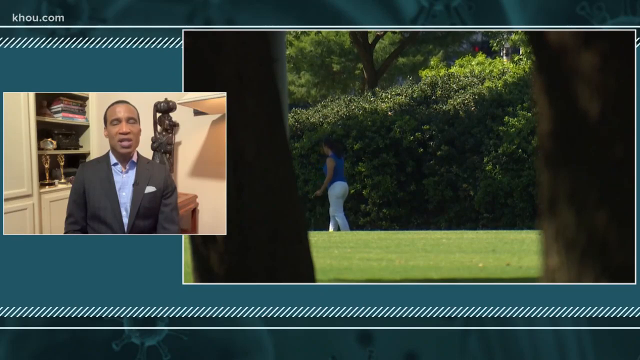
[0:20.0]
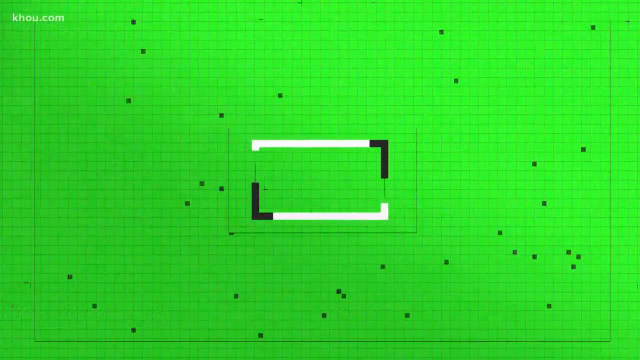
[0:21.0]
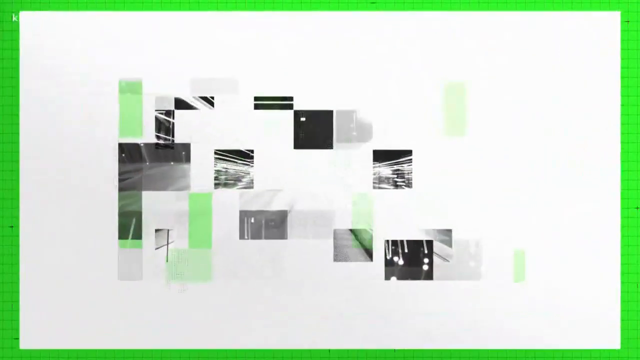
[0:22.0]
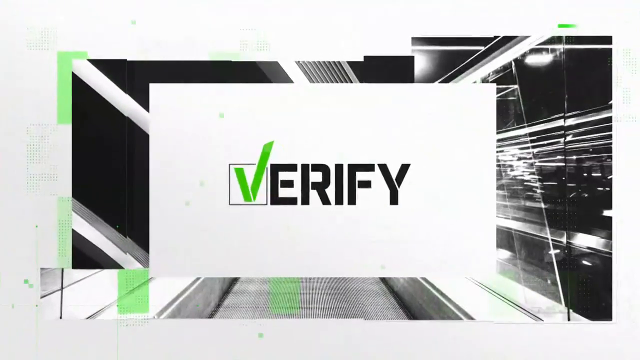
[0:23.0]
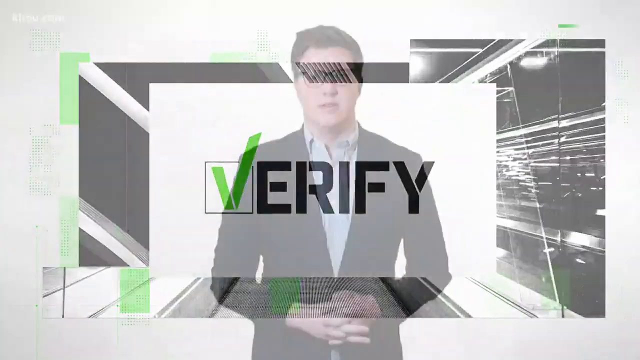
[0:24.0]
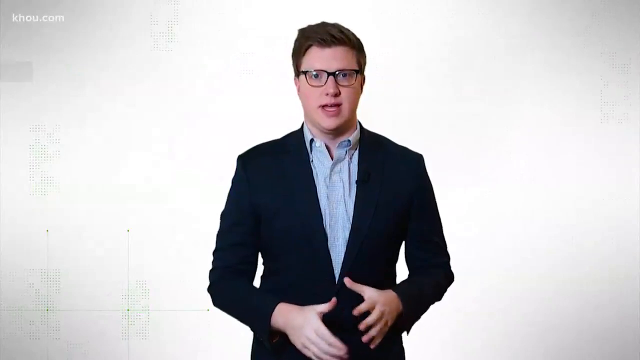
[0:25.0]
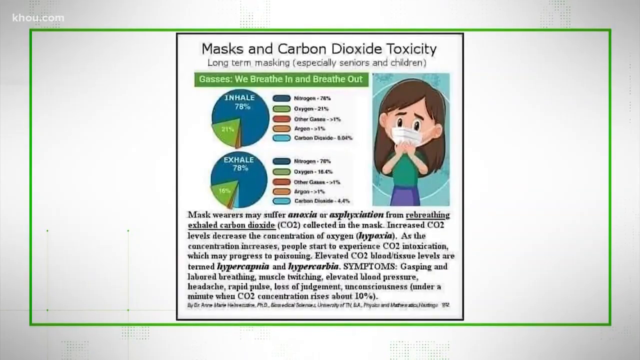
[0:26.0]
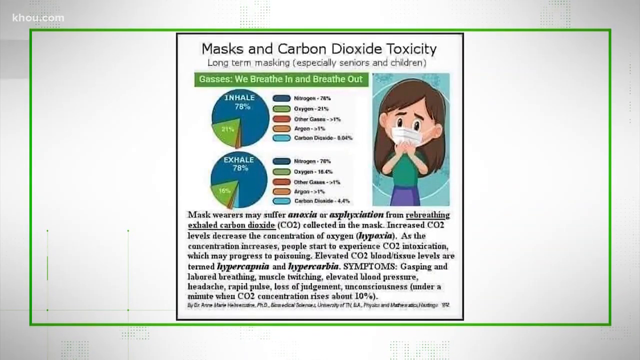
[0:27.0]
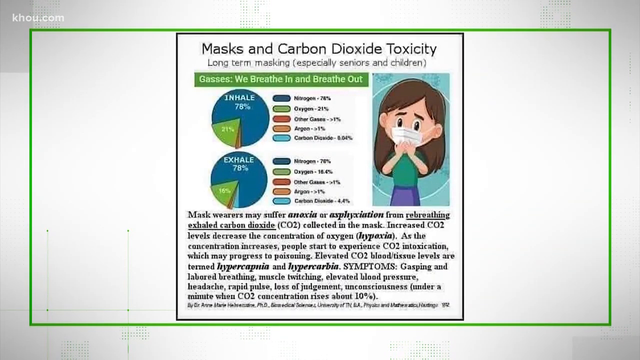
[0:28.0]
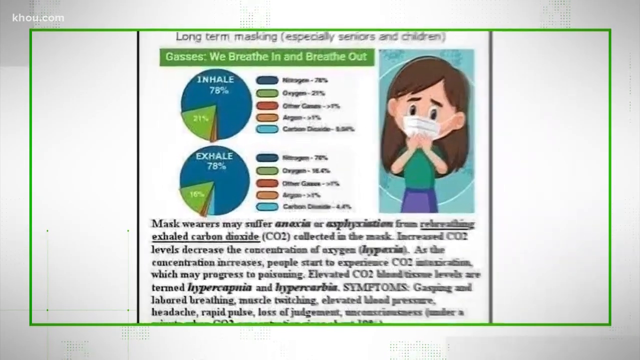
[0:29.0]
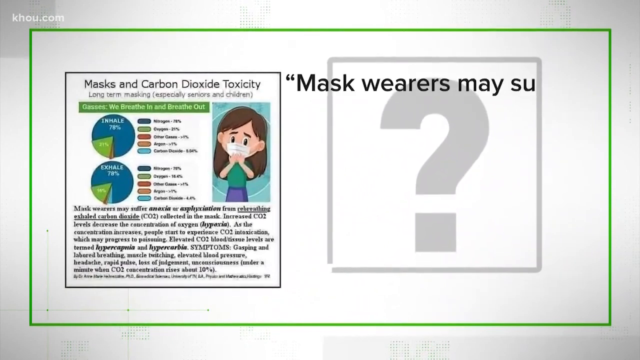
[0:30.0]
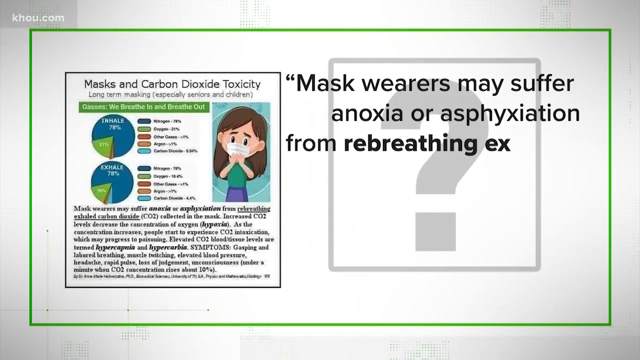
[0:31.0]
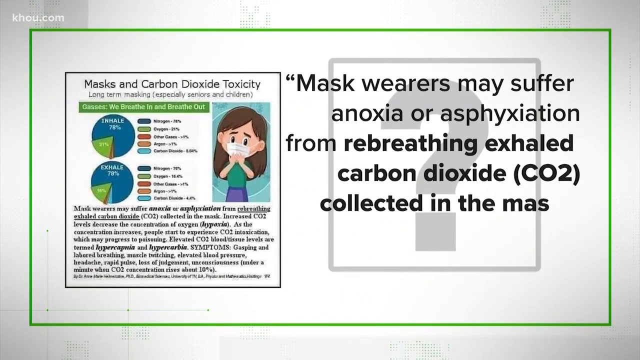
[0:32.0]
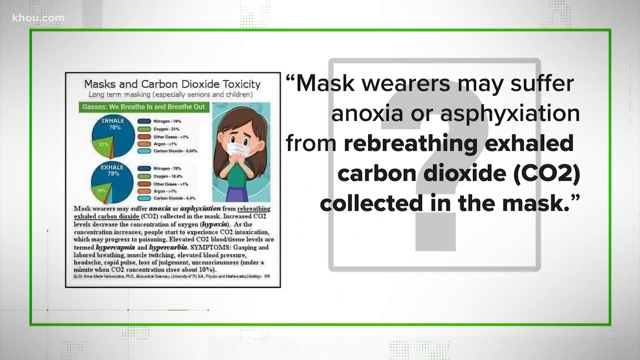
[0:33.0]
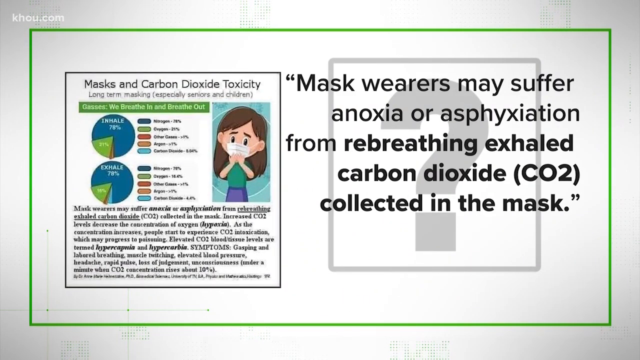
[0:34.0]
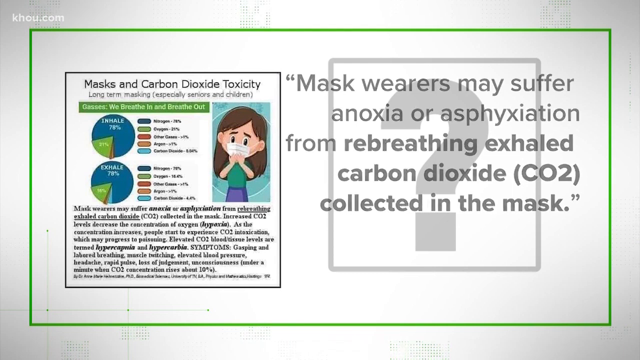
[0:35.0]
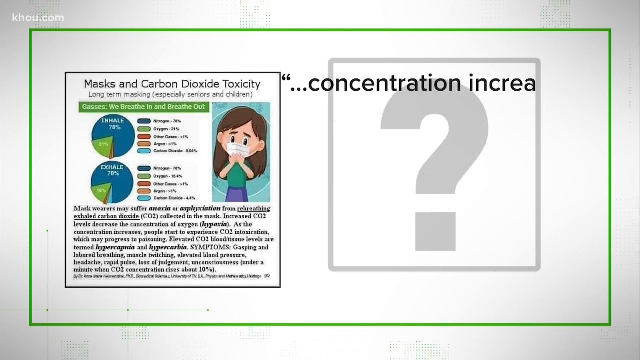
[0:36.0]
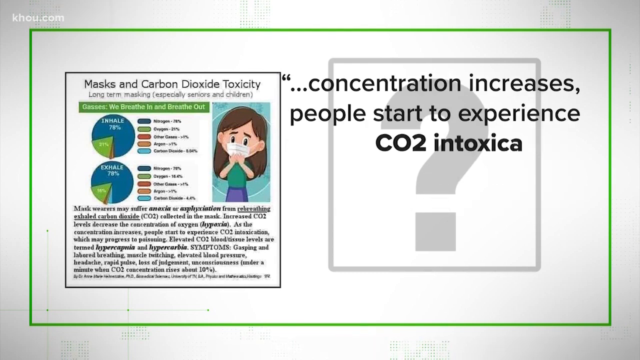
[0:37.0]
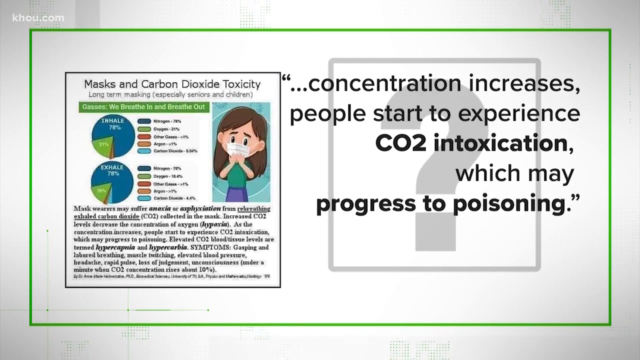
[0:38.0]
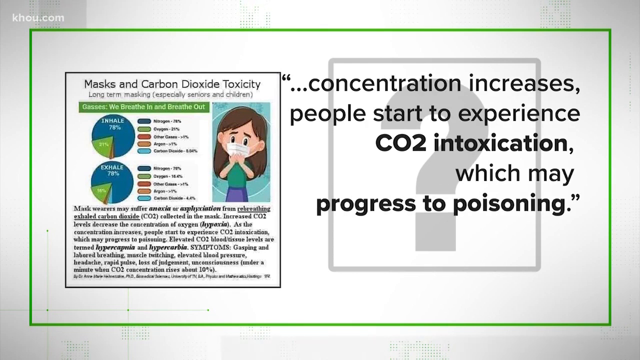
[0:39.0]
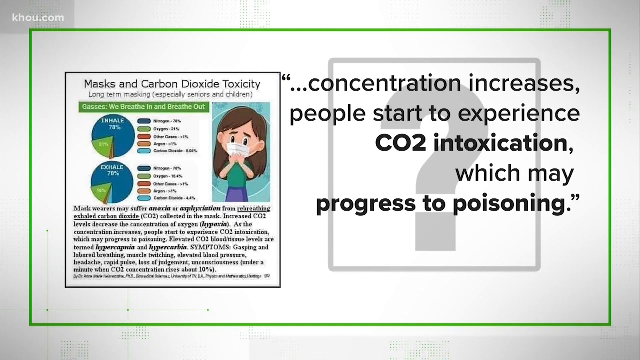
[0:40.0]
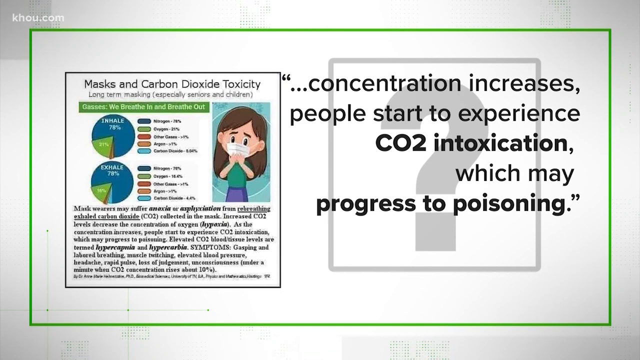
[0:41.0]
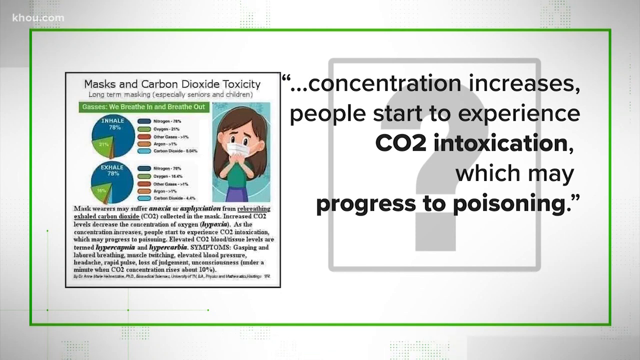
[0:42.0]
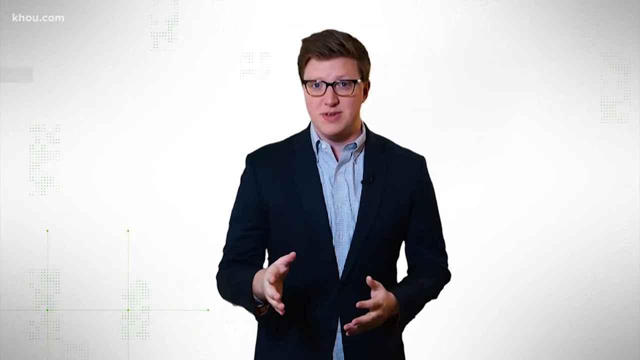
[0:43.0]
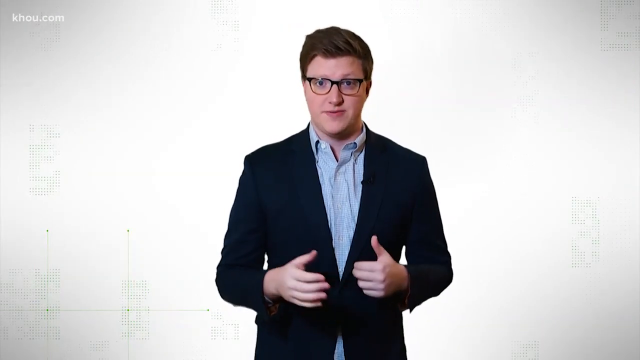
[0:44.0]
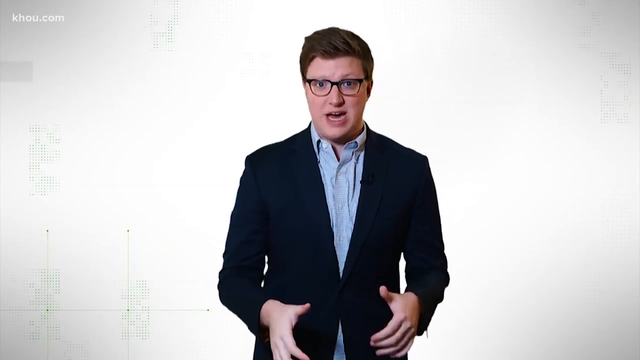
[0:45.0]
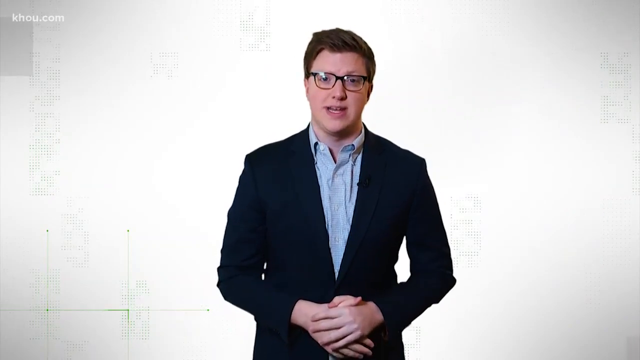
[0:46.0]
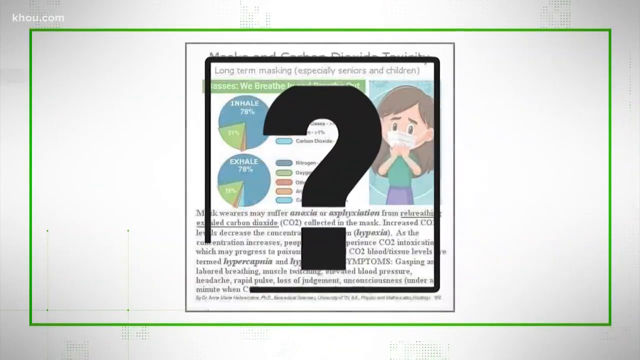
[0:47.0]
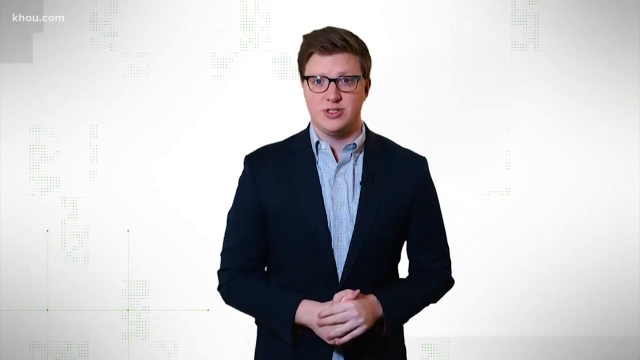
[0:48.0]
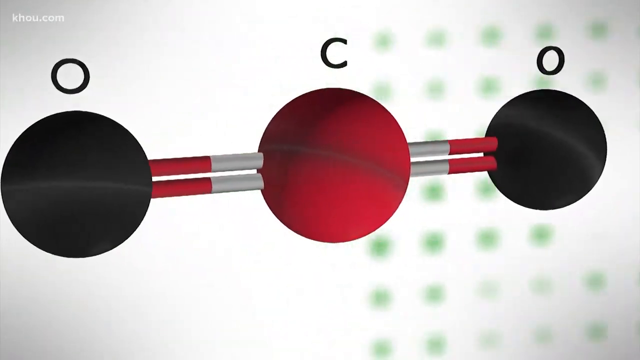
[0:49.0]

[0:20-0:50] The screen goes a very vivid bright green with small blue squares all around it, moving. A white box appears in the middle and takes over the whole screen before a logo appears that says "Verify", with the V in green and made to look like a tick in a box. The logo zooms closer, and the next shot shows a man who looks like an interviewer, wearing a suit and glasses and speaking directly to the camera. A poster then comes up on the screen that says "Masks and Carbon Dioxide Toxicity"; it has a green border and a smaller illustration of a child on the right-hand side. The poster moves so it is smaller on the left, a grey question mark appears on the right, and over the top of this black text appears one letter at a time about mask wearers and CO2 intoxication which may progress to poisoning. The shot moves back to the man speaking at the camera, who moves his hands quite a lot. The grey question mark appears before a different illustration appears, with a circle and two lines coming off it.